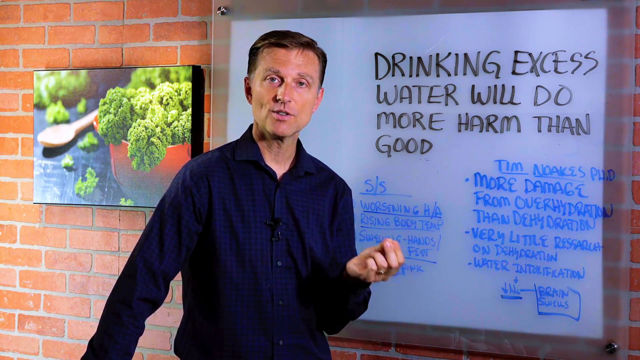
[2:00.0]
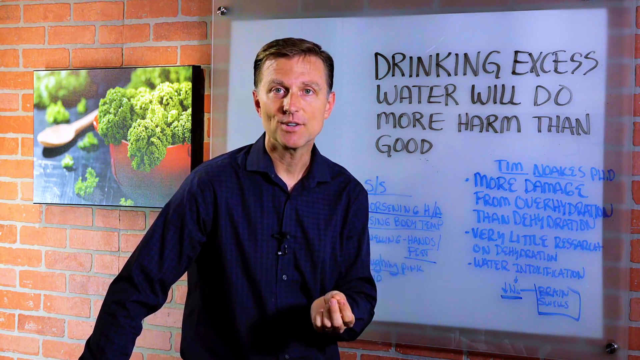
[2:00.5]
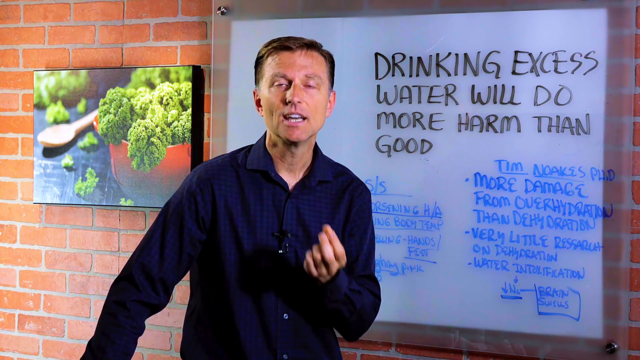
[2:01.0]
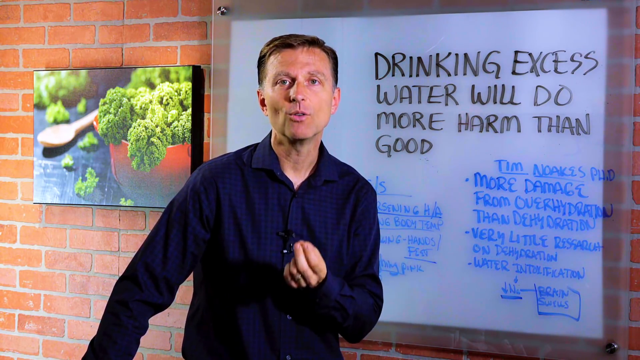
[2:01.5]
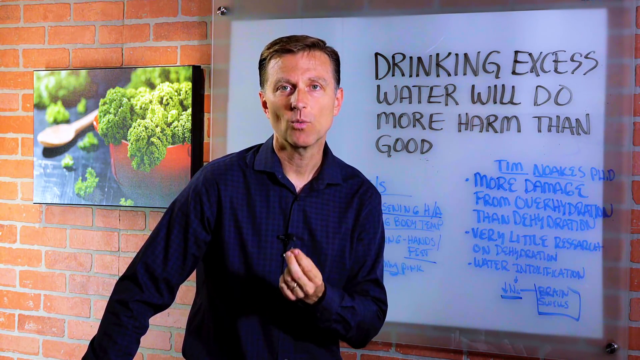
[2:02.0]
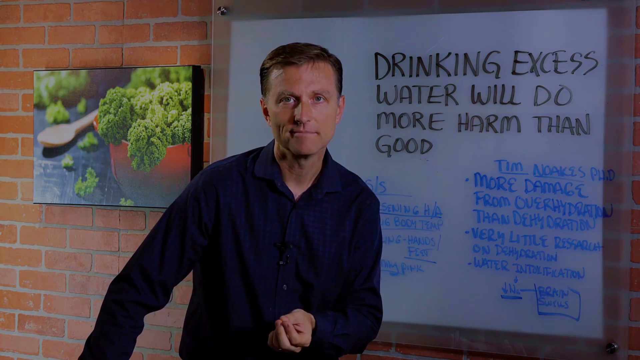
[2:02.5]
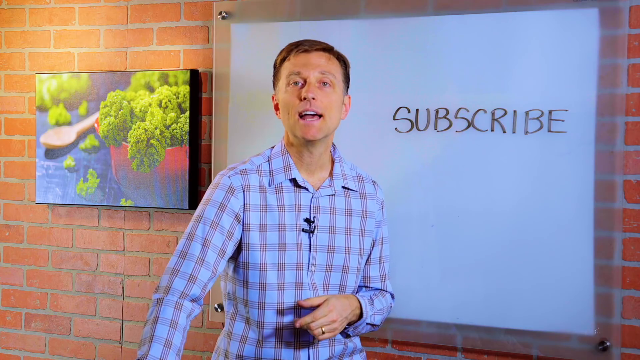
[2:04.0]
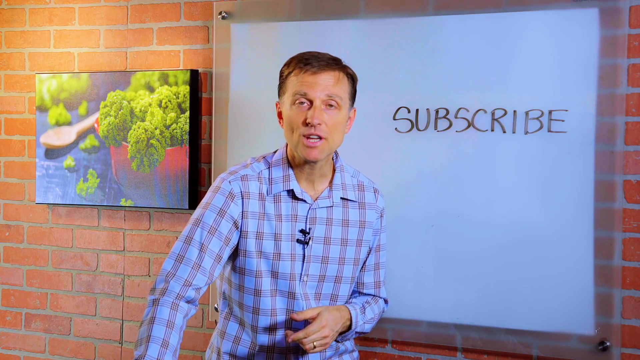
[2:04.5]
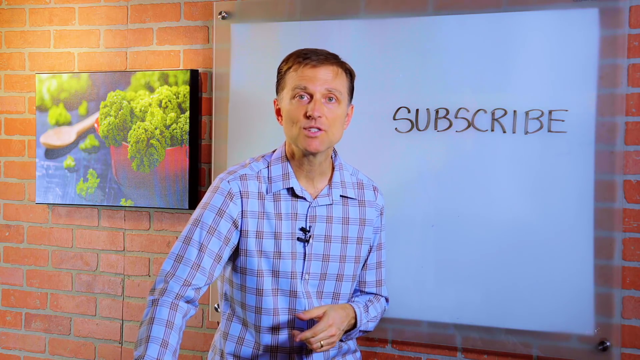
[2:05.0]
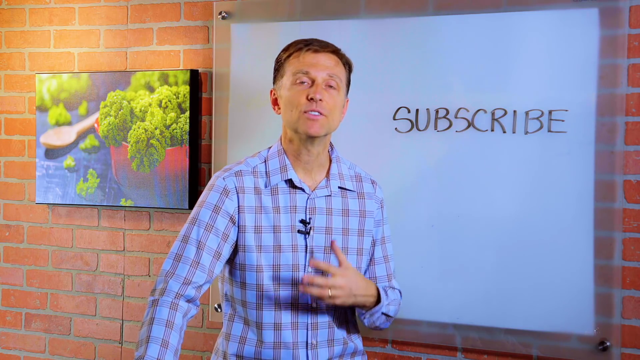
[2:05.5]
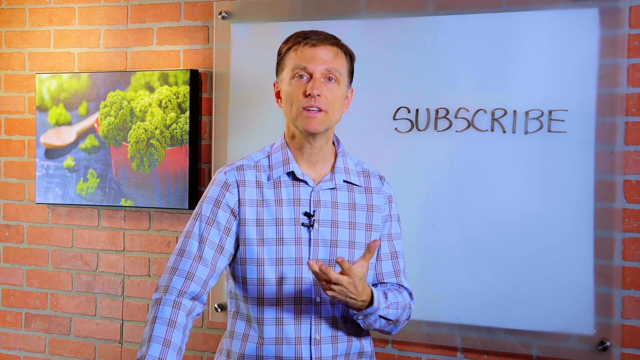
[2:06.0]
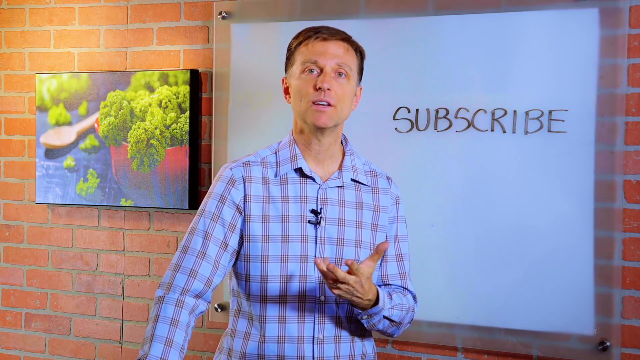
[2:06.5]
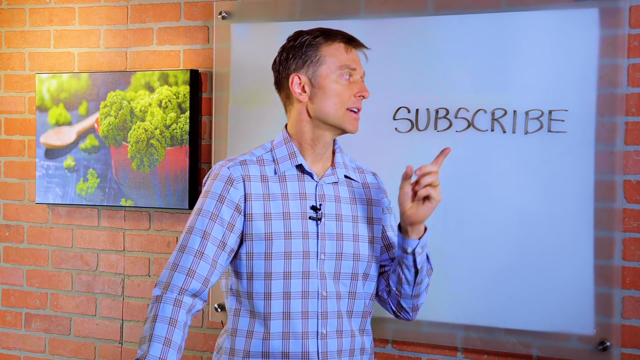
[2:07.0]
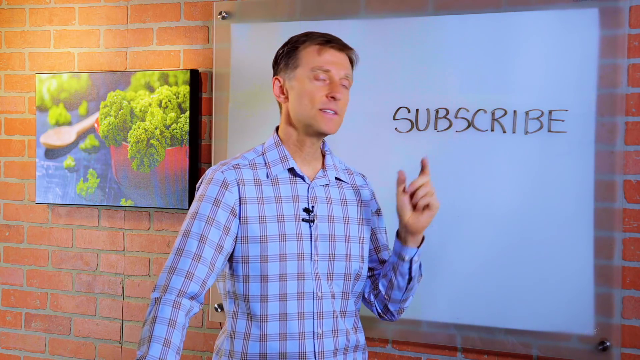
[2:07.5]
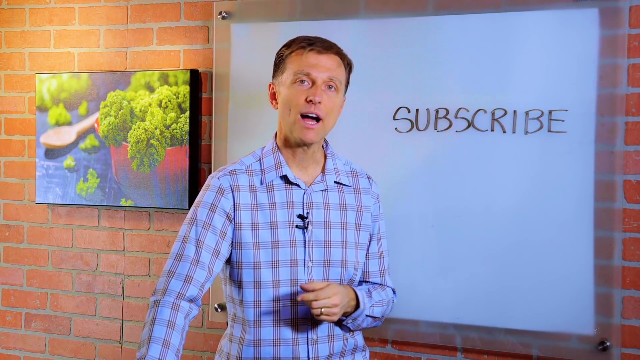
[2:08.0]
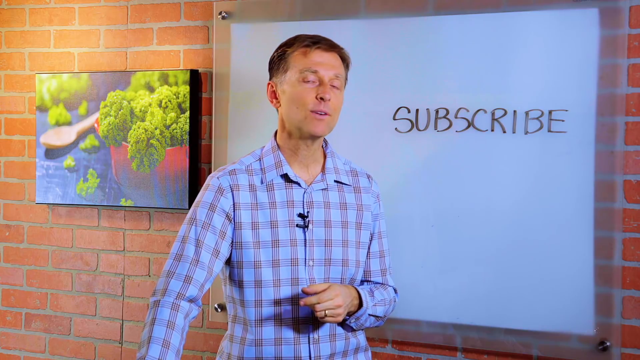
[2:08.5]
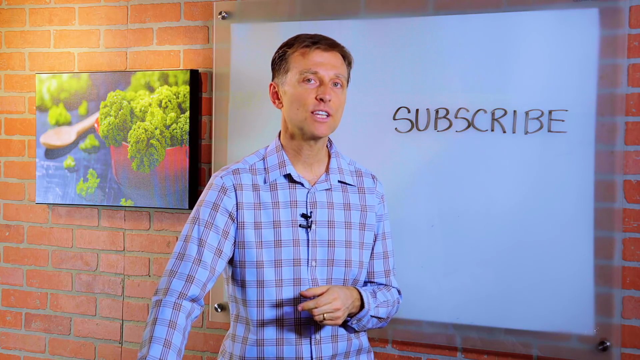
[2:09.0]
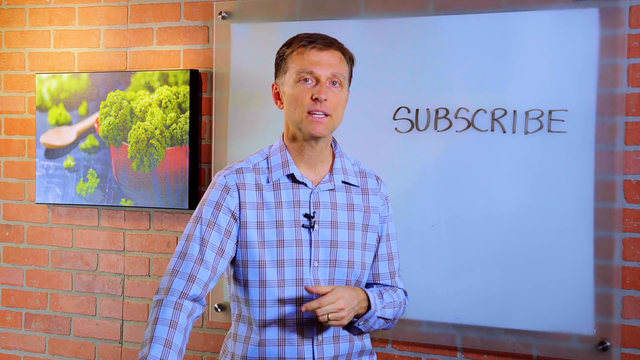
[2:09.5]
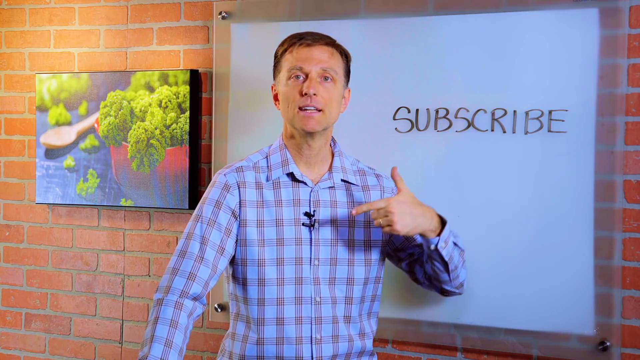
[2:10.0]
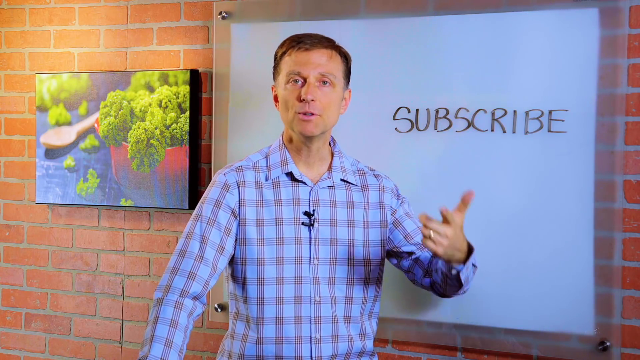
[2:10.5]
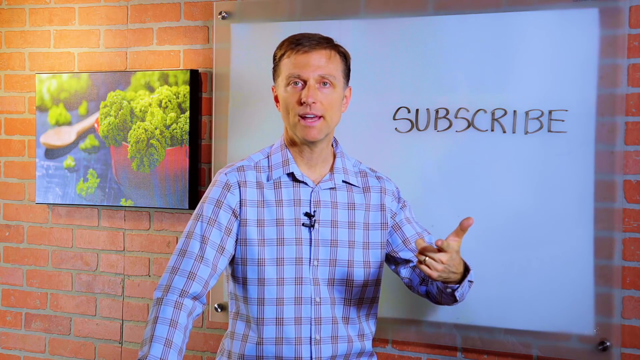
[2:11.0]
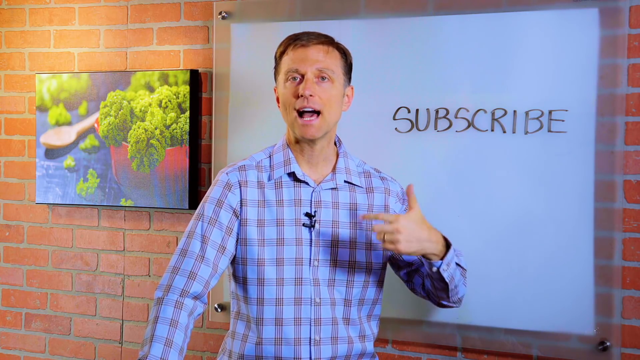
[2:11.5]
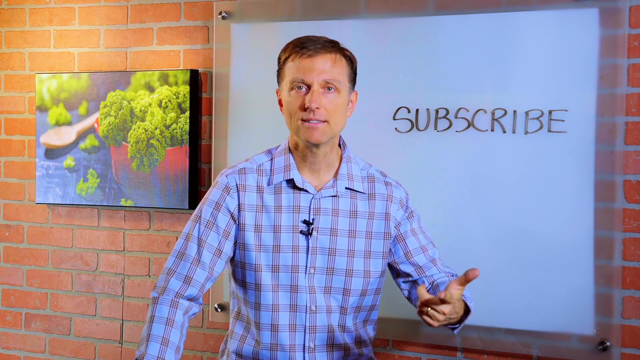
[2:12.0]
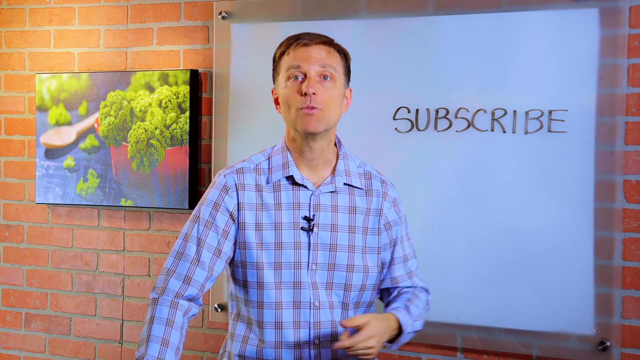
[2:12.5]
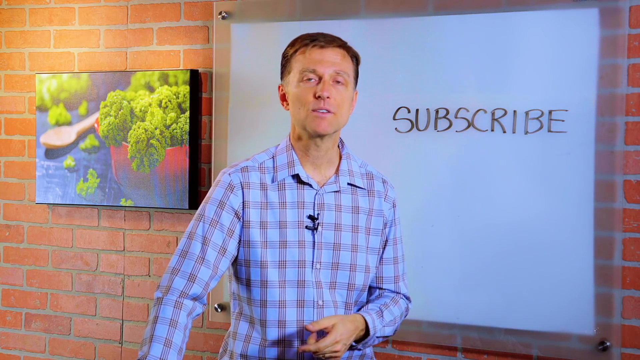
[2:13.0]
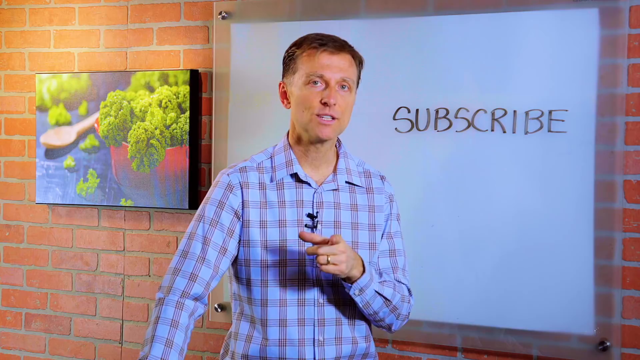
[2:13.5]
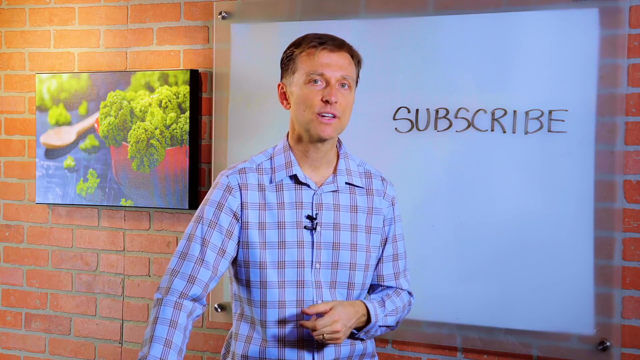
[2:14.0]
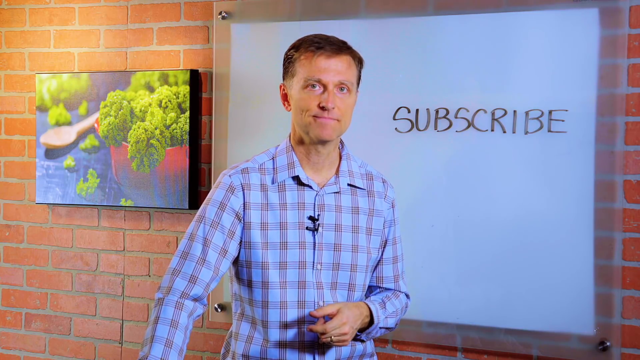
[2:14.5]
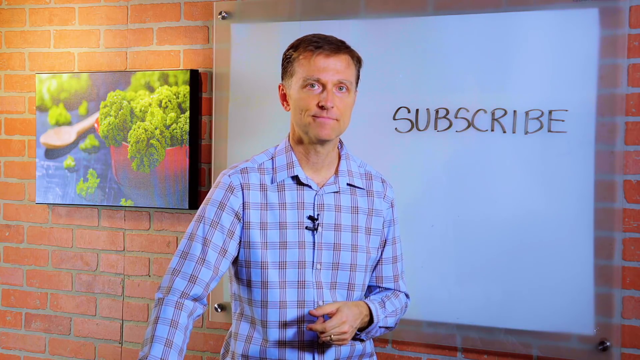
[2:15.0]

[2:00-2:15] The instructor wraps up, standing in front of his whiteboard and addressing the camera directly, his right arm kind of down and extended outward and his left hand helping emphasize what he is saying. The video goes to a black screen and then transitions to another scene in the same room, with the same reddish-brown brick wall, the whiteboard on one side, and to the left of the whiteboard a painting that looks like a red cup of broccoli on a black table with a light brown wooden spoon and a few broccoli florets spilled on the table. This time the instructor wears a lighter blue flannel button-down shirt with thin burgundy lines, and the whiteboard behind him has only the word "SUBSCRIBE" in black capital letters, apparently as an outro scene.